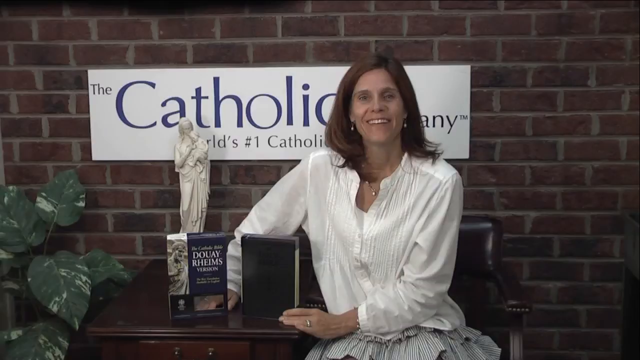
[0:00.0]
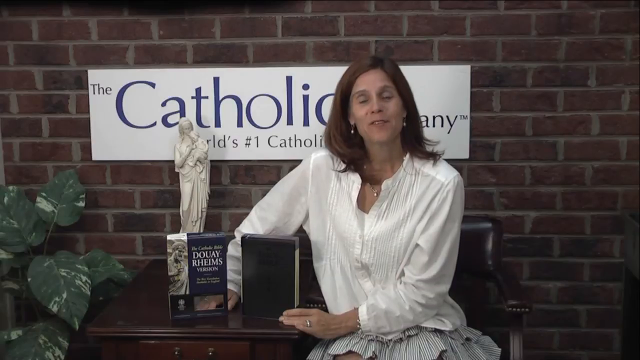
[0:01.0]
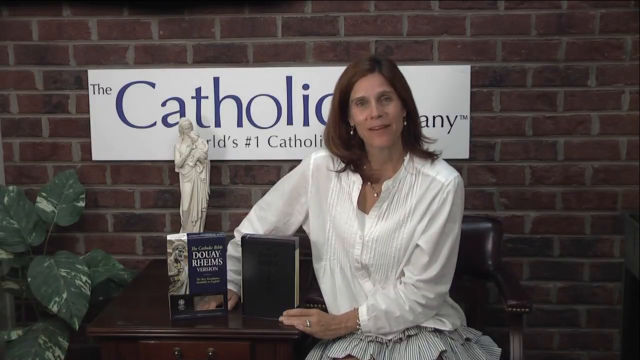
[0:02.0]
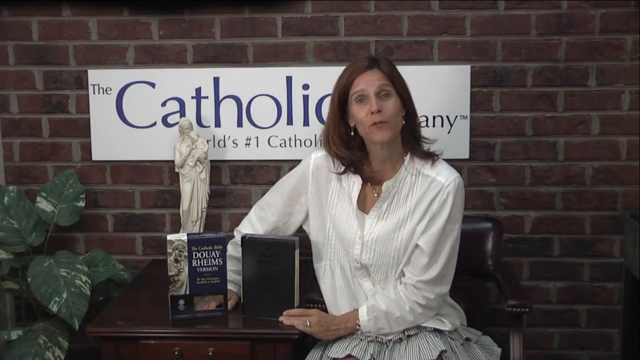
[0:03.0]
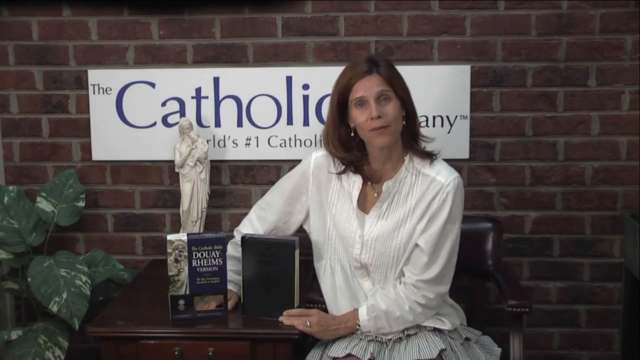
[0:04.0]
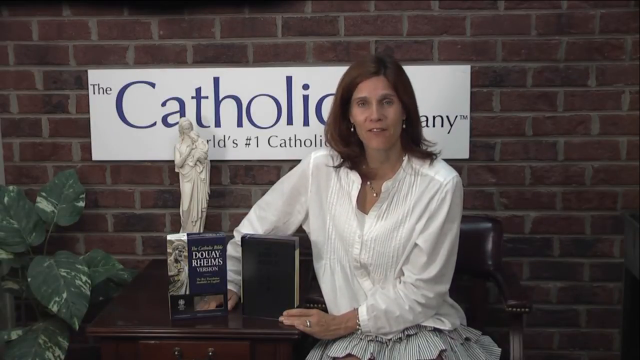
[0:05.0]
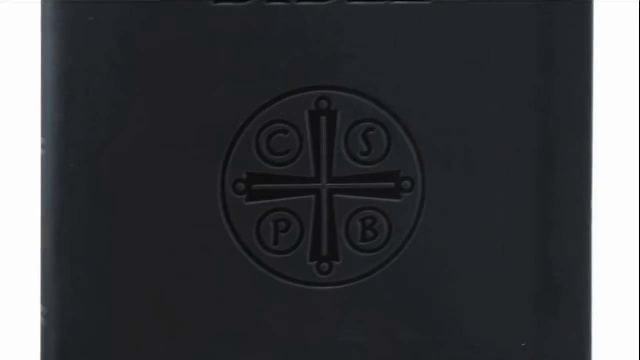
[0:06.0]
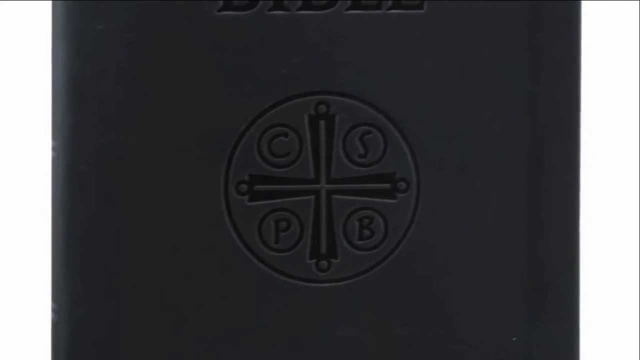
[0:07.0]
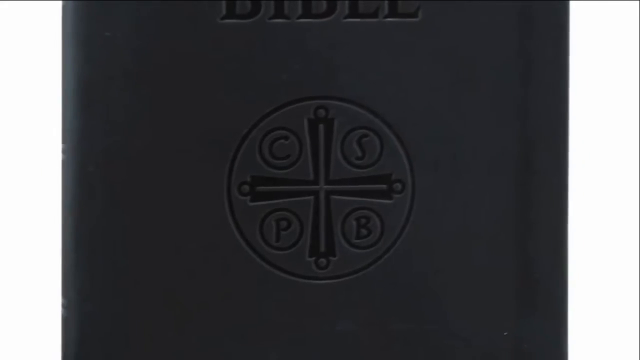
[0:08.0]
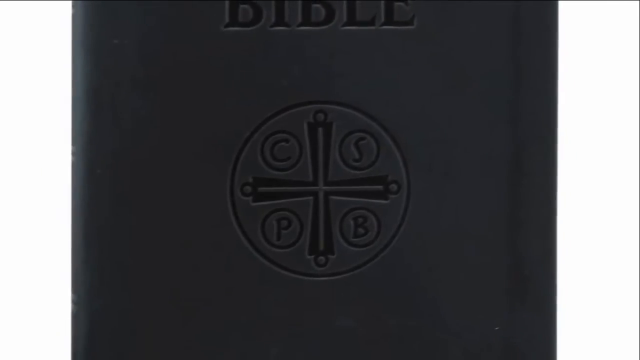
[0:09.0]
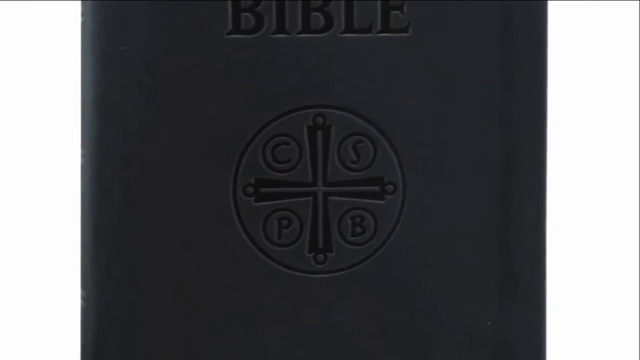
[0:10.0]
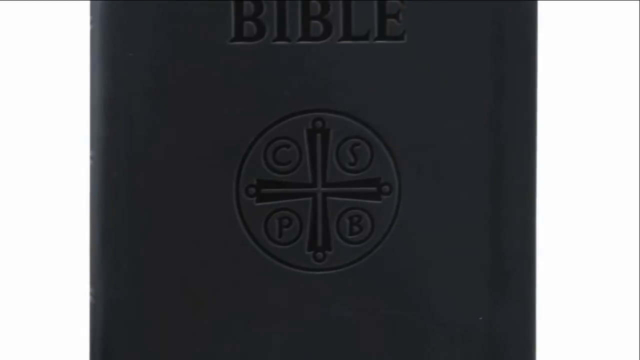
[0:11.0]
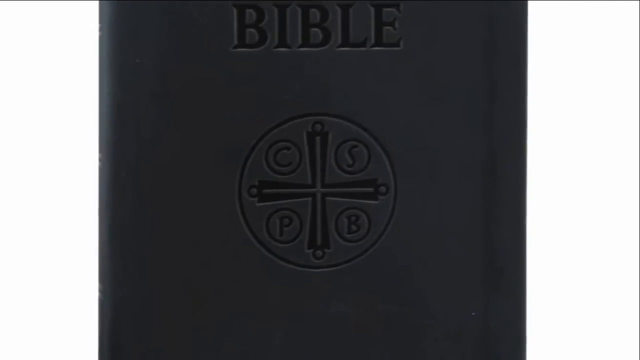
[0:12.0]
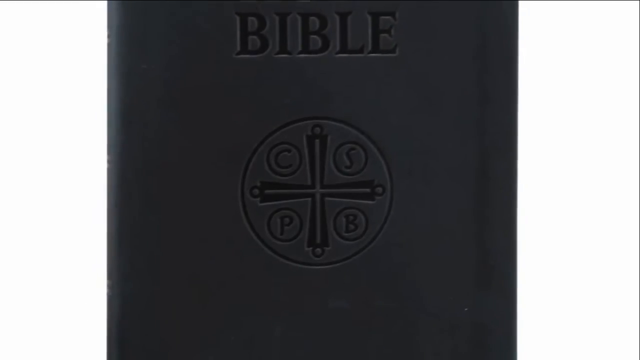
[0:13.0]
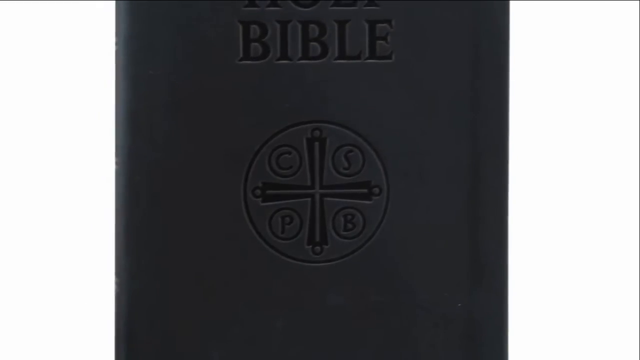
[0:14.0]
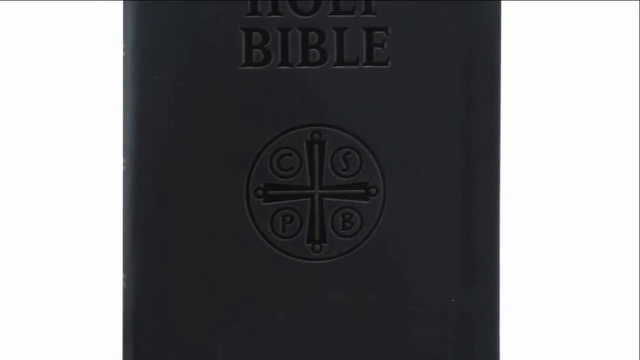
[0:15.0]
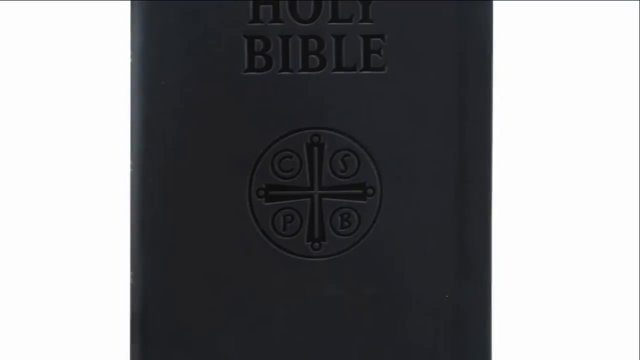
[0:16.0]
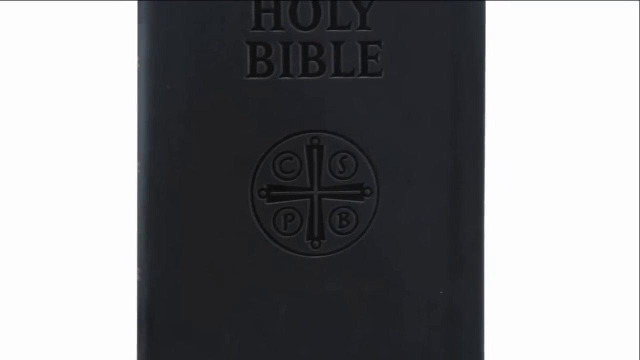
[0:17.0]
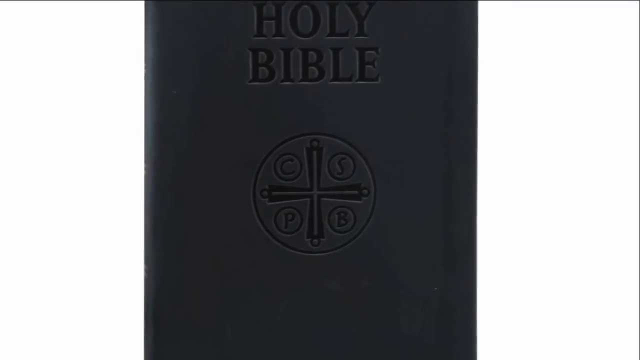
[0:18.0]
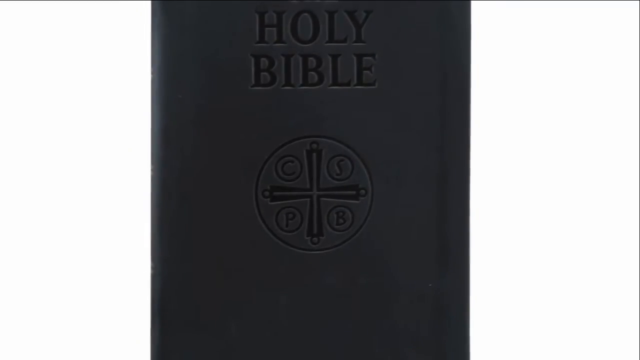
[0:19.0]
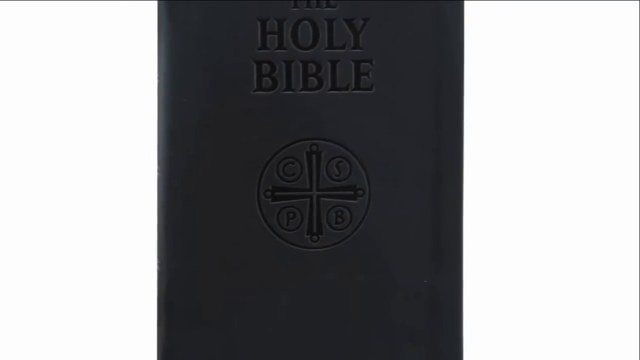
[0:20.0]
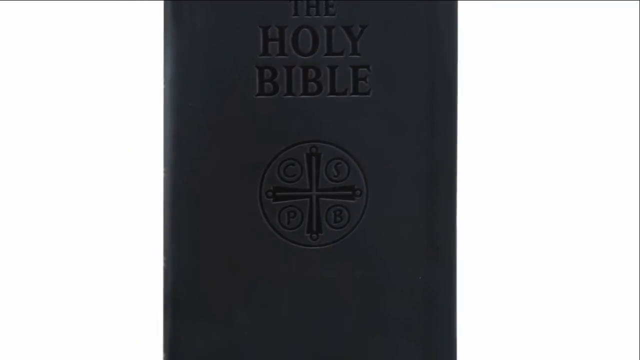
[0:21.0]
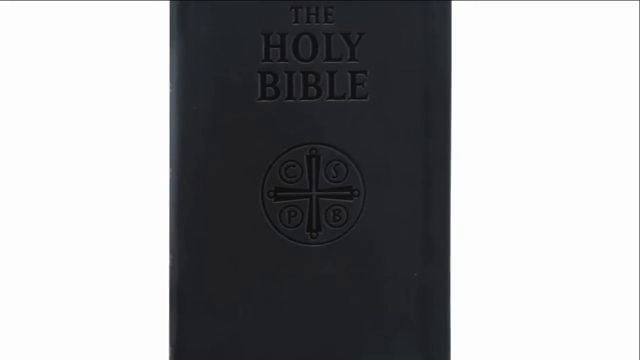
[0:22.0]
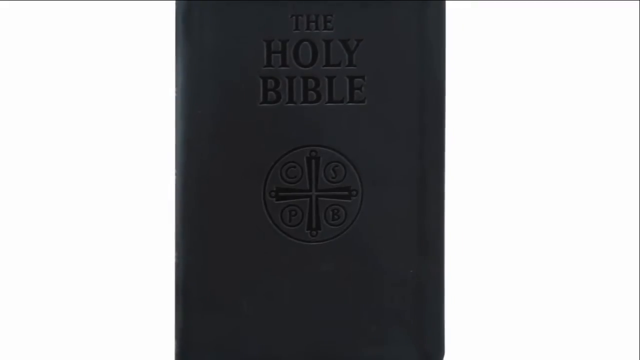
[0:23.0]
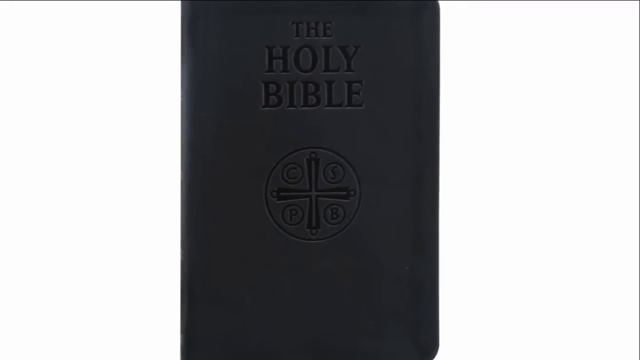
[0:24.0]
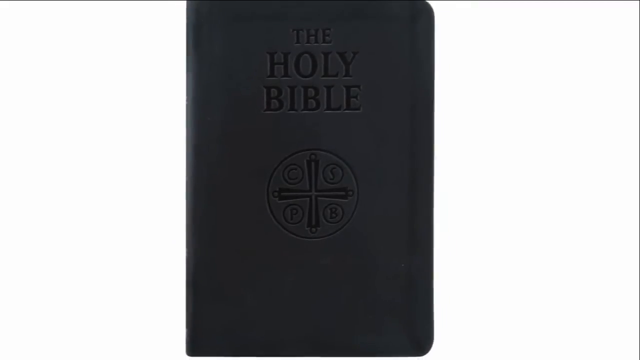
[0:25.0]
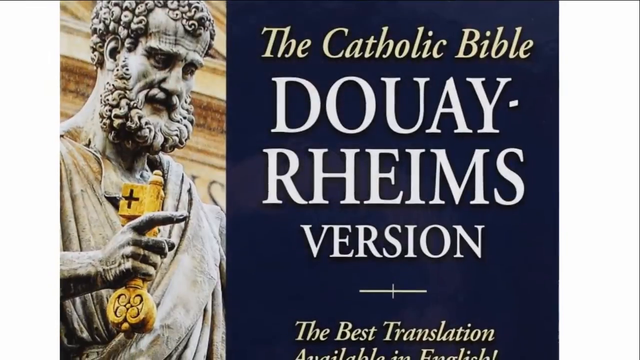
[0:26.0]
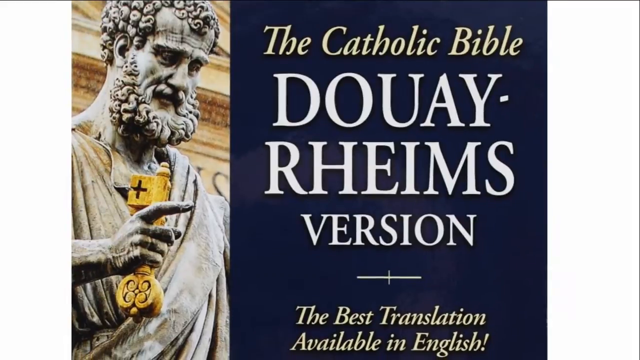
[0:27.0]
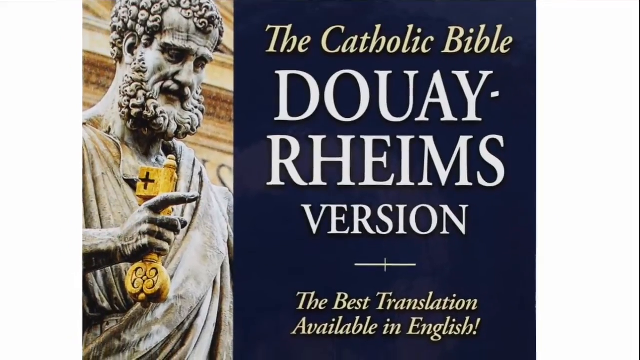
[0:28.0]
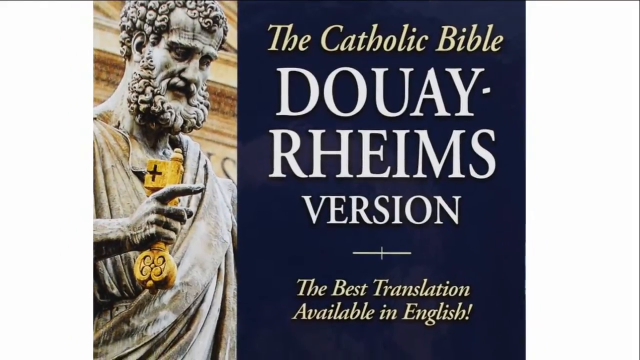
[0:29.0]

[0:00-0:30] A lady is seated on a black leather-covered chair, holding two books. To her far right, a very large dark green pot plant is on the floor; its leaves are oval-shaped with a point and have some white patches on them. Behind her is a dark red brick wall with a white rectangular sign on it, with dark blue writing reading "the Catholic" and "world's number one Catholic"; the rest of the words cannot be made out because her head is in the way. A small statue of Mother Mary is on the desk, on which her right forearm is resting, behind the two books. She is smiling and has straight reddish-brown hair that goes to just beyond her shoulders. She wears a long-sleeve white button-up shirt over a white camisole, earrings, a necklace, and a multi-layered skirt that looks like it has greyish stripes. The shot then cuts to a very close-up view of a black Bible that says "the Holy Bible".